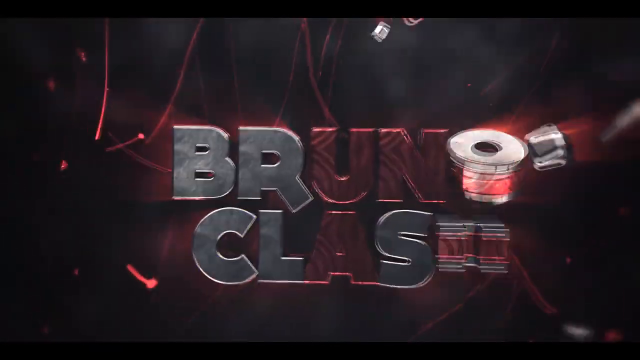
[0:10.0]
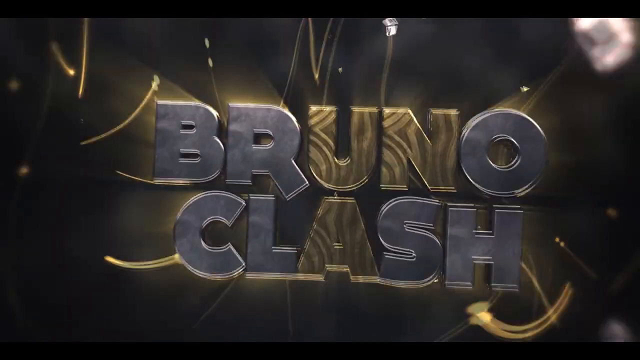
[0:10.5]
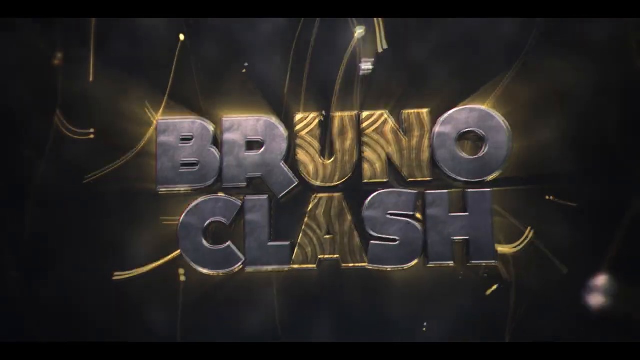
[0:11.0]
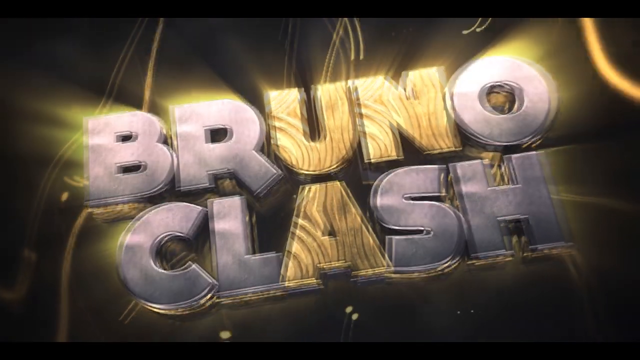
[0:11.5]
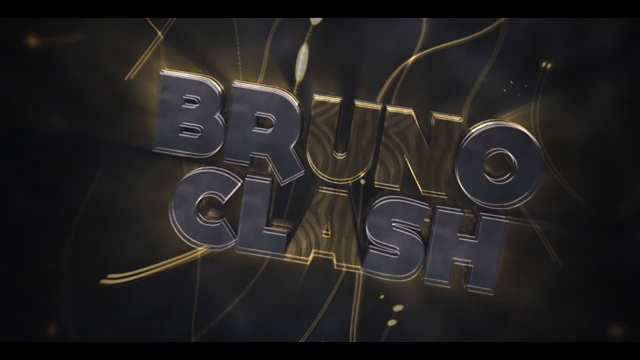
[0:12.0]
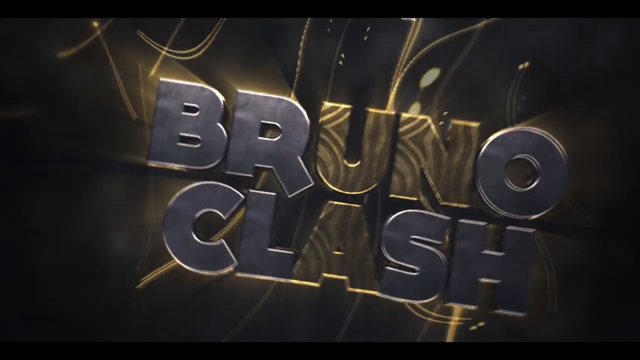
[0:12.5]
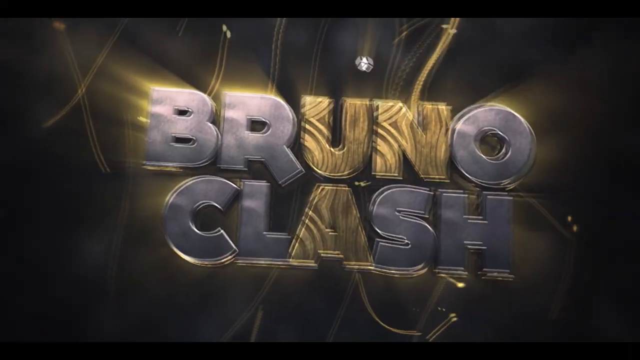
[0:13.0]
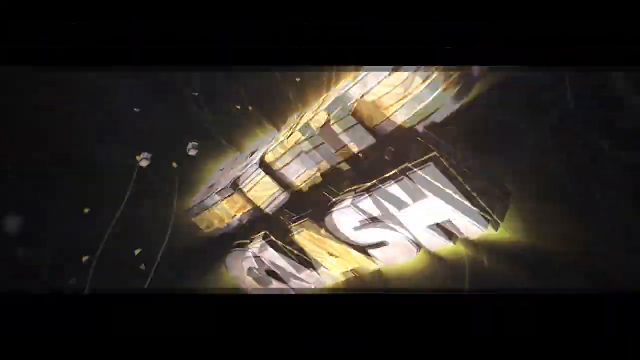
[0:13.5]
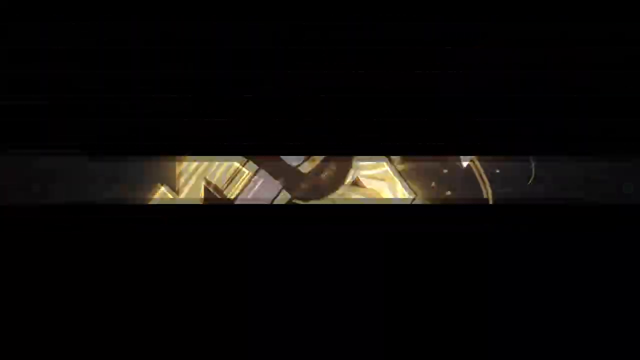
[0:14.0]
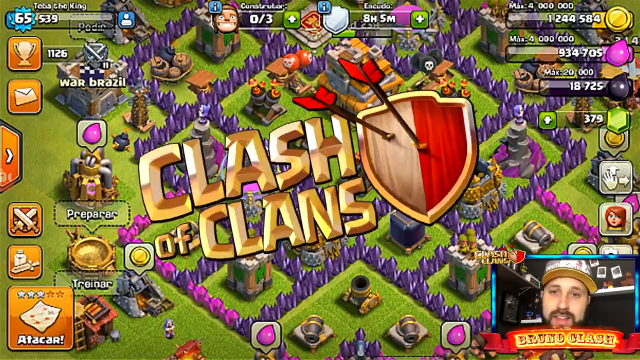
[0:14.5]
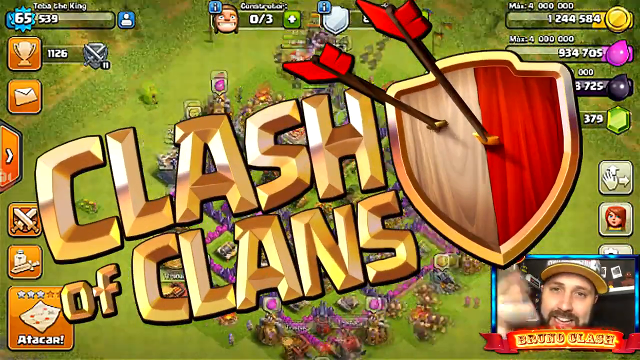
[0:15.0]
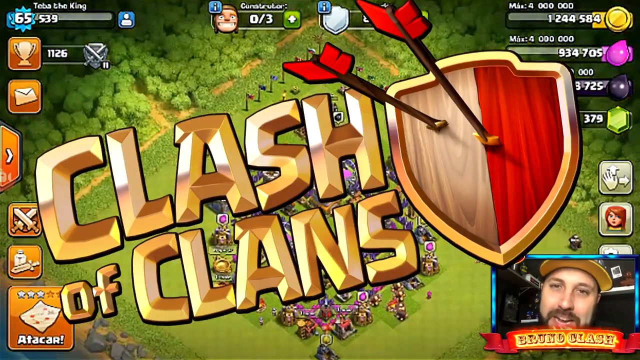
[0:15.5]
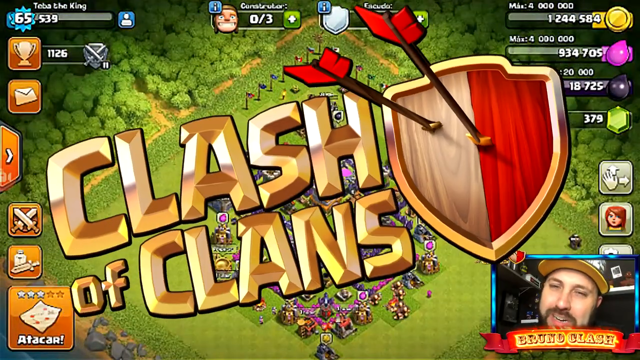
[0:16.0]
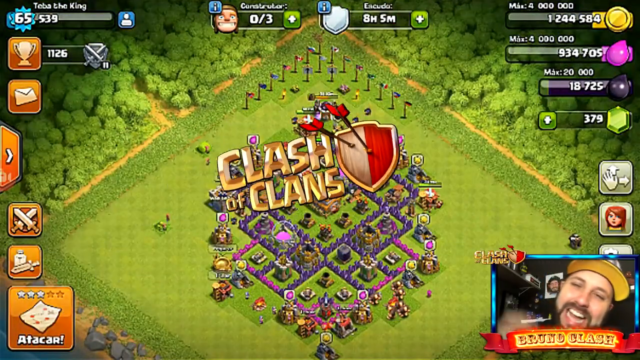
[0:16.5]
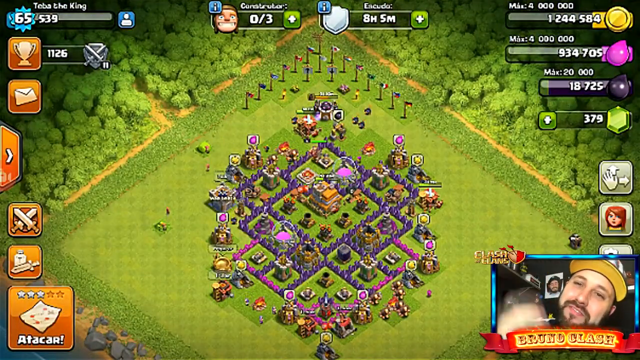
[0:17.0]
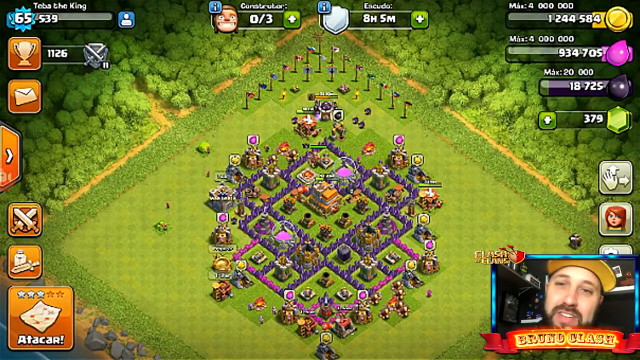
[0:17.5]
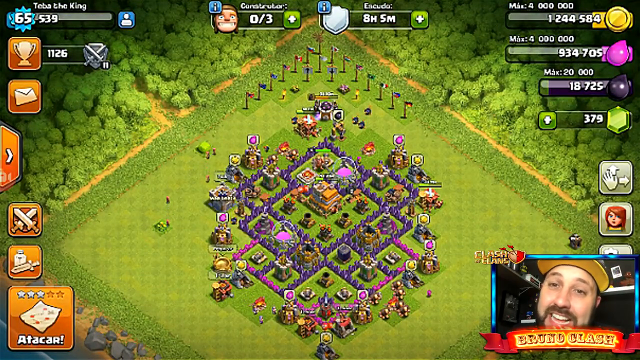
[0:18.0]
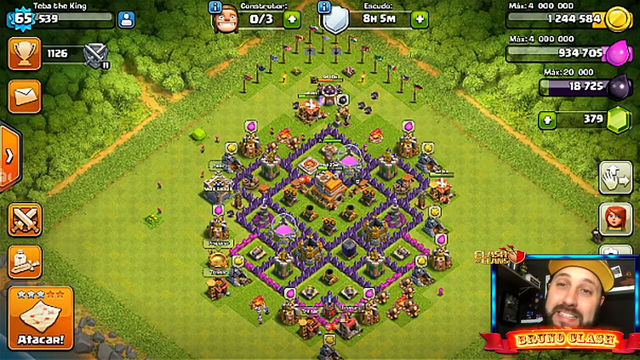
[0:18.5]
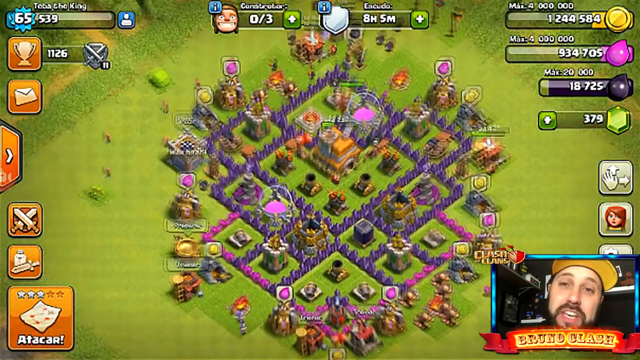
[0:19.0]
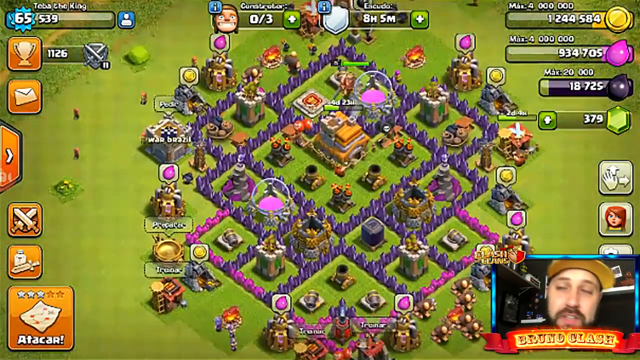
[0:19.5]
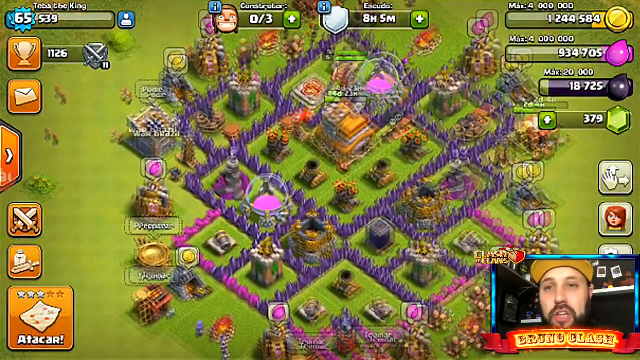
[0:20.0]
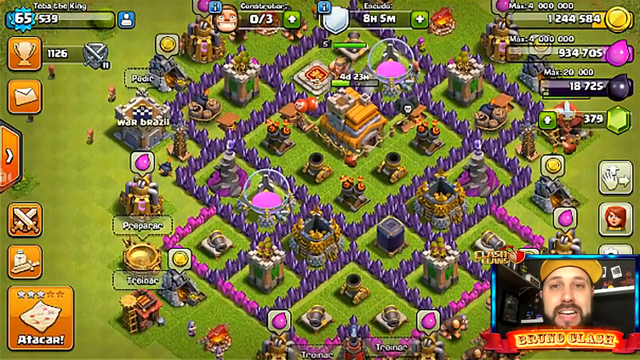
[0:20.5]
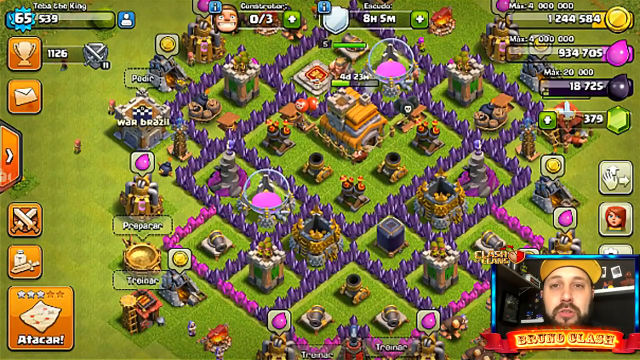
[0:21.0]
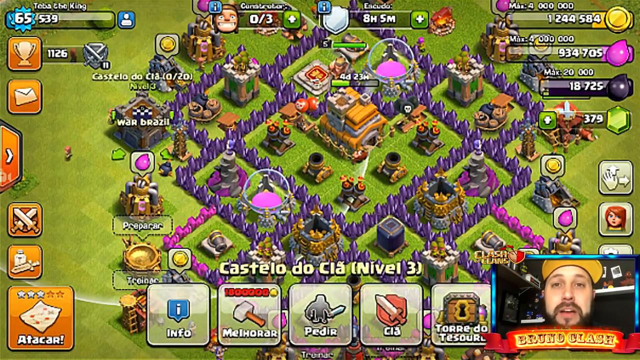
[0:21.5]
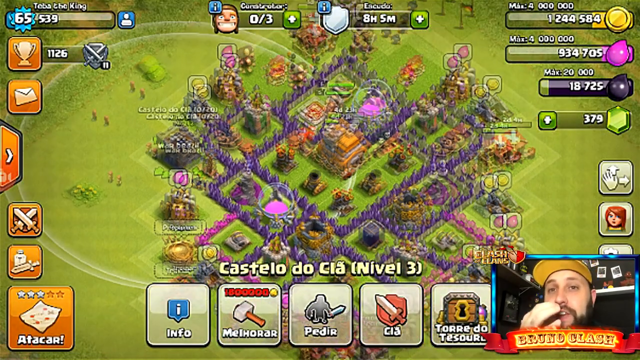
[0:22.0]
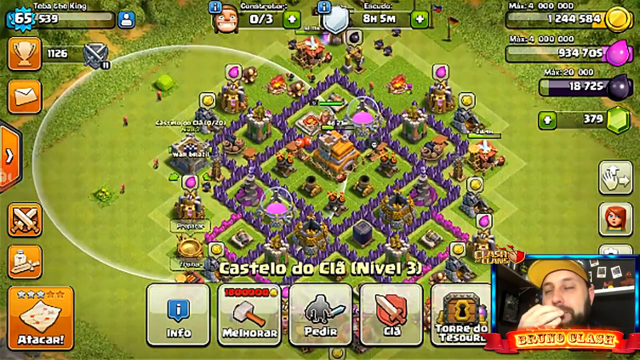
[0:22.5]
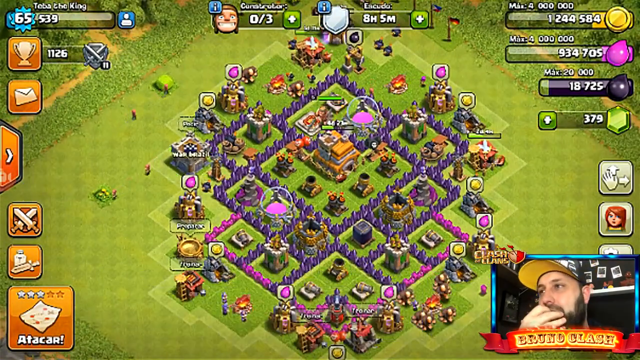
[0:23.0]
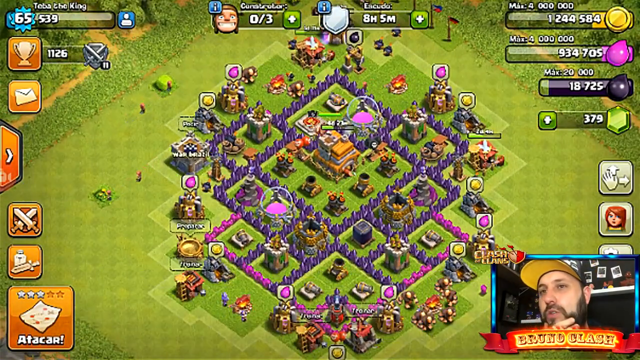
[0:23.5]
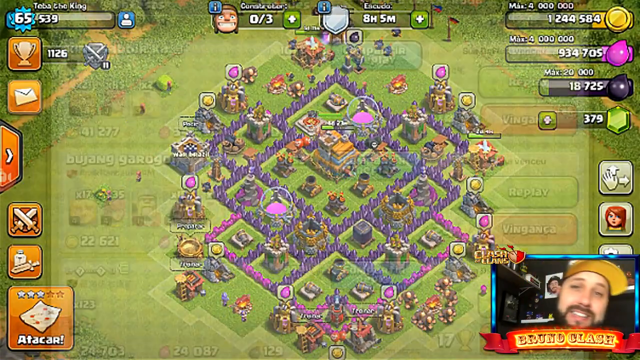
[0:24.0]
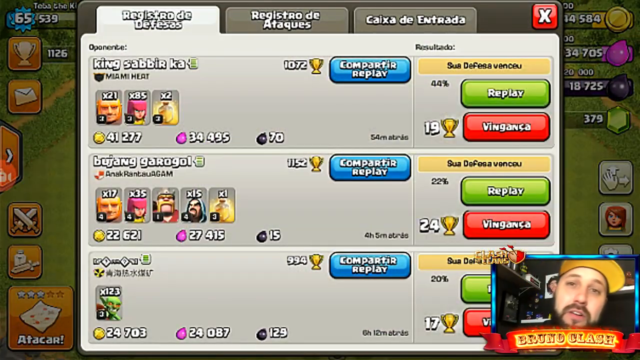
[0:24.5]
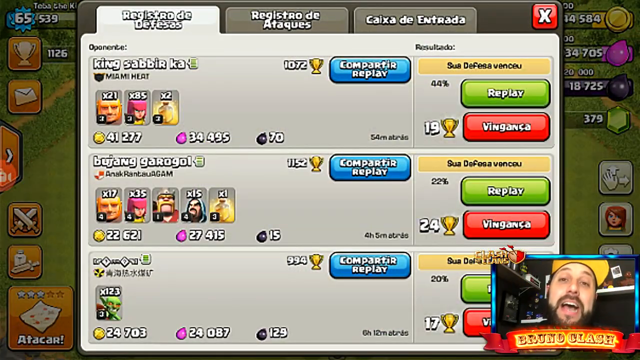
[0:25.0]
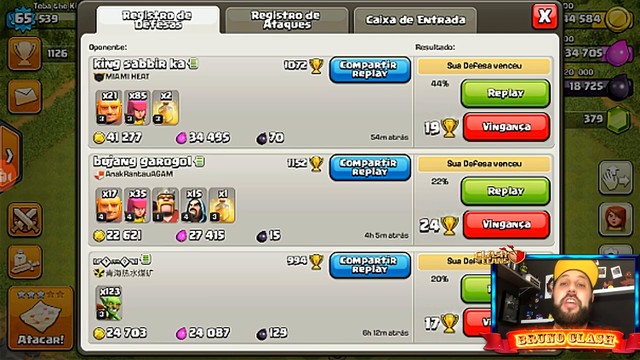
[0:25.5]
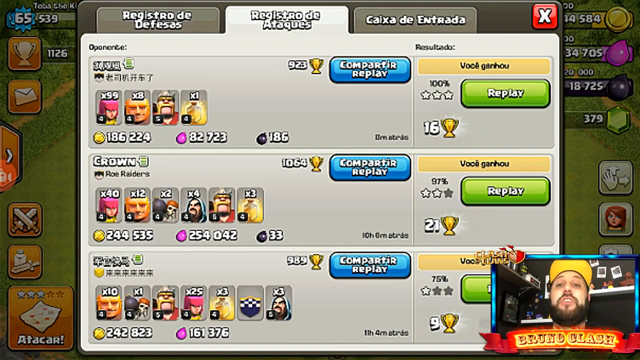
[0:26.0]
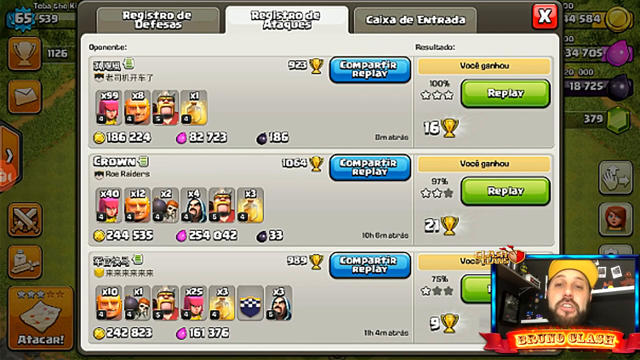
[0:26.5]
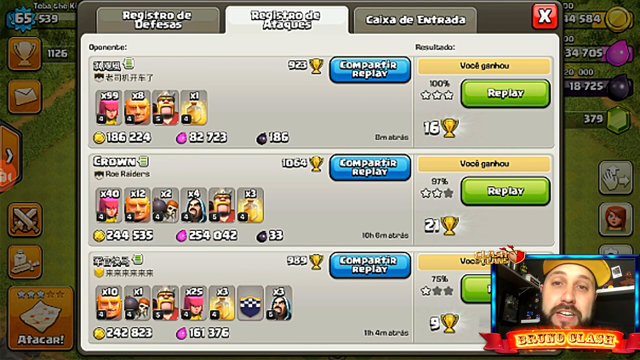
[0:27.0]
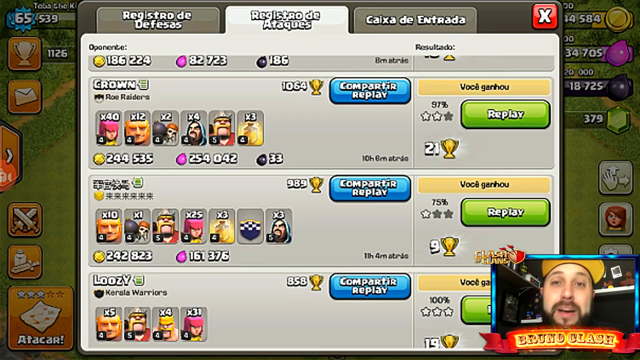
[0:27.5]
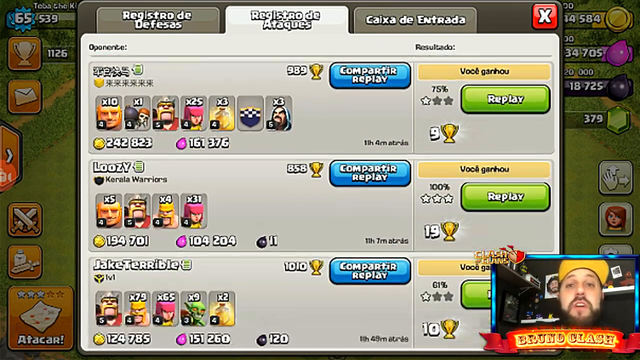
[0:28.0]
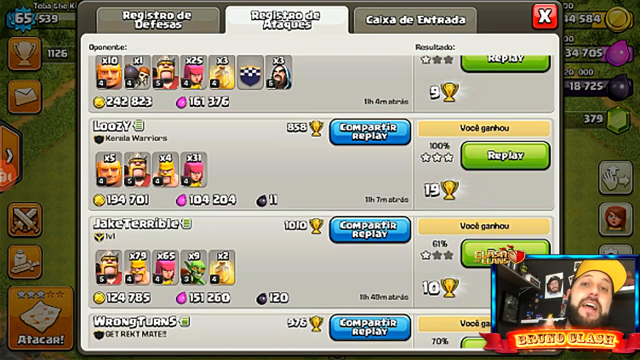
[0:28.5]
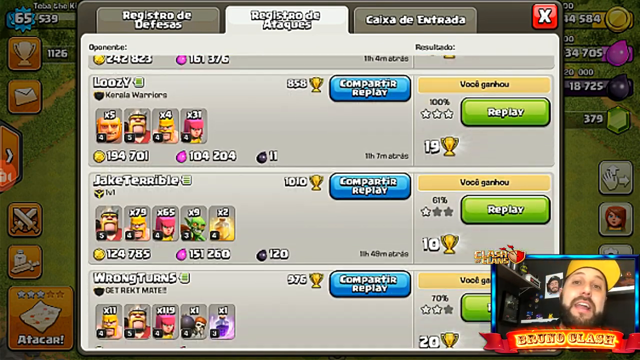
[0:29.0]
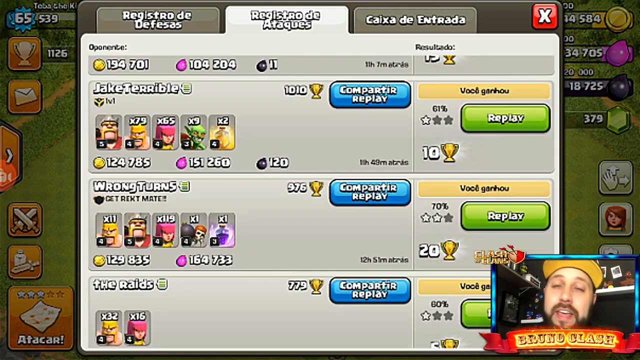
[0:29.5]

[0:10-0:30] The 3D animated "Bruno Clash" logo animates out, and a video game screen comes in that says "Clash of Clans". The game shows what looks almost like a city. In the bottom right-hand corner is a picture-in-picture video feed of a man who is talking. The view changes from the city graphic to a pop-up that appears to be a leaderboard, written in what seems to be Spanish. The man flips through a couple of different tabs on the screen.